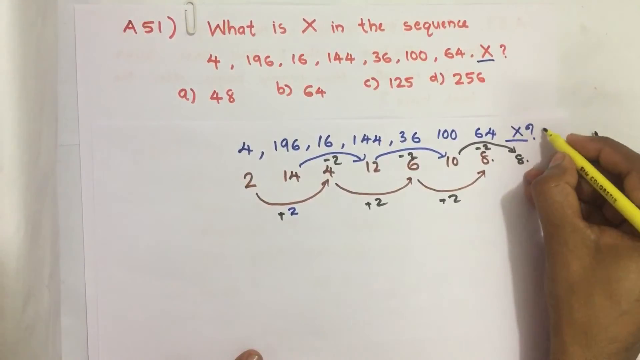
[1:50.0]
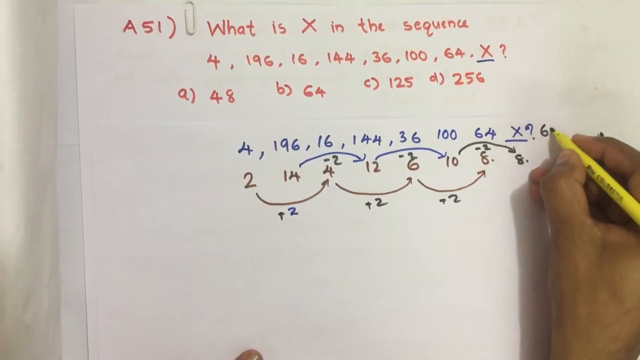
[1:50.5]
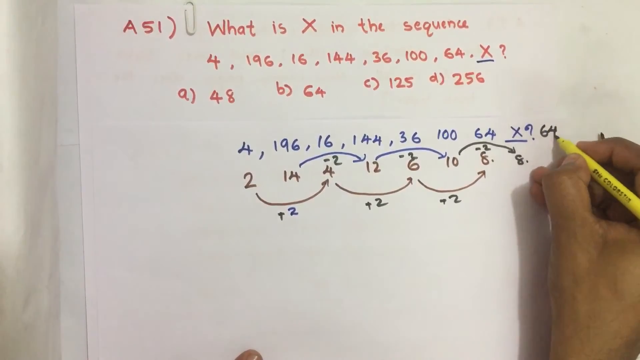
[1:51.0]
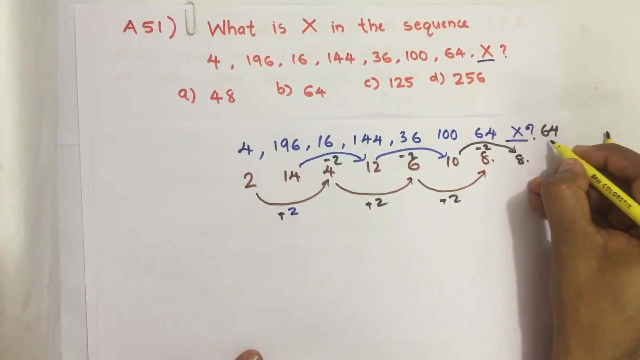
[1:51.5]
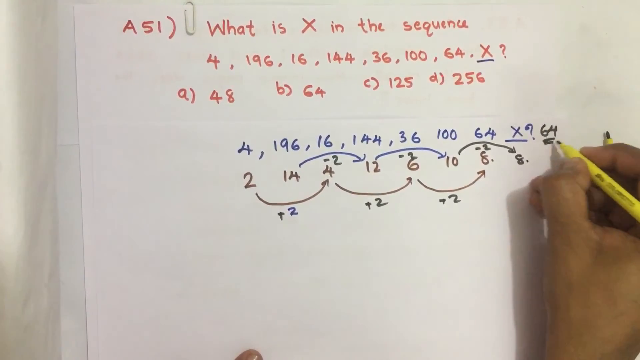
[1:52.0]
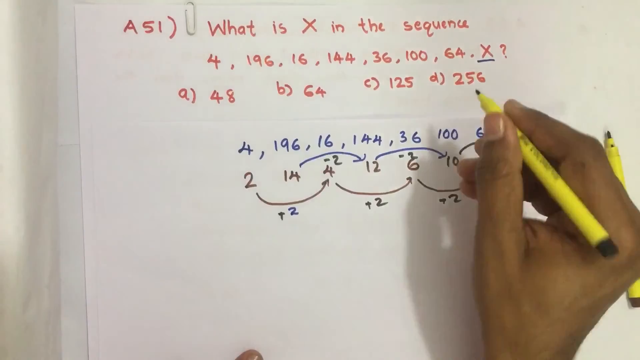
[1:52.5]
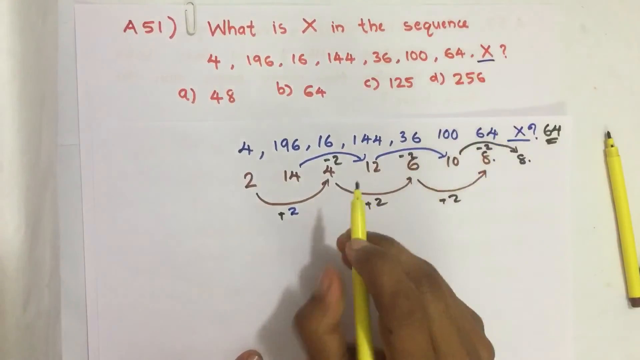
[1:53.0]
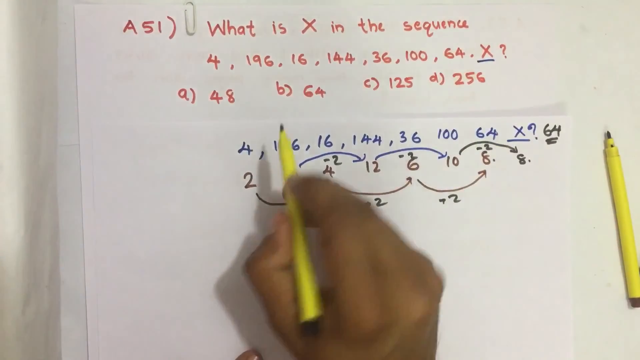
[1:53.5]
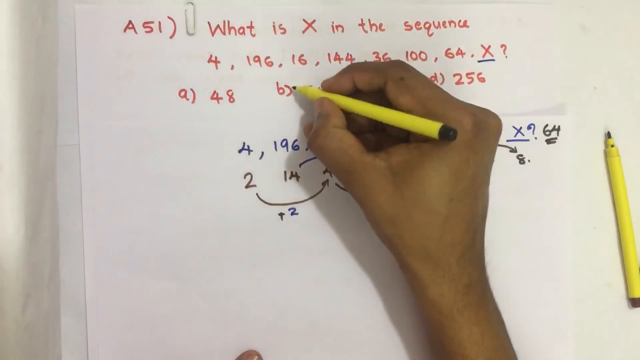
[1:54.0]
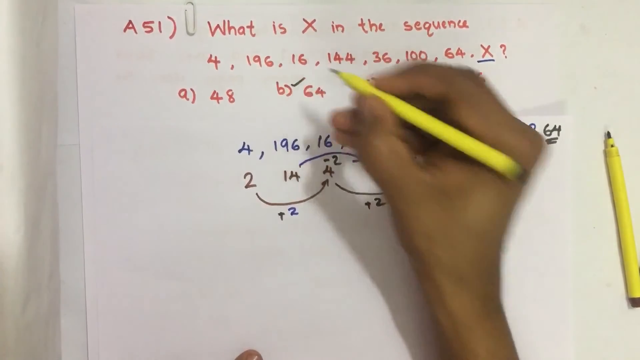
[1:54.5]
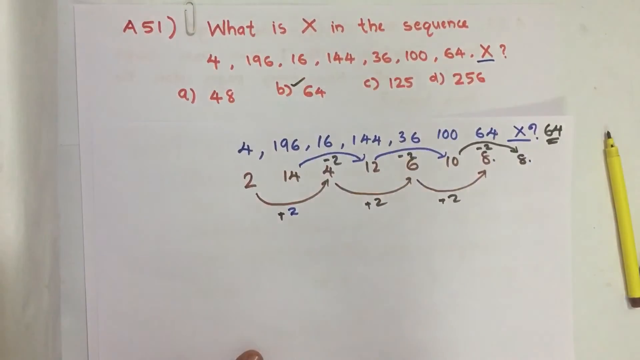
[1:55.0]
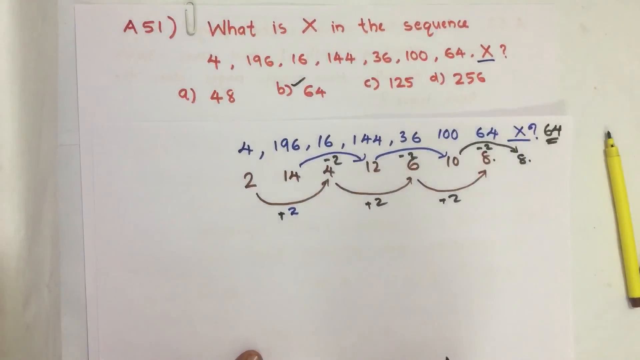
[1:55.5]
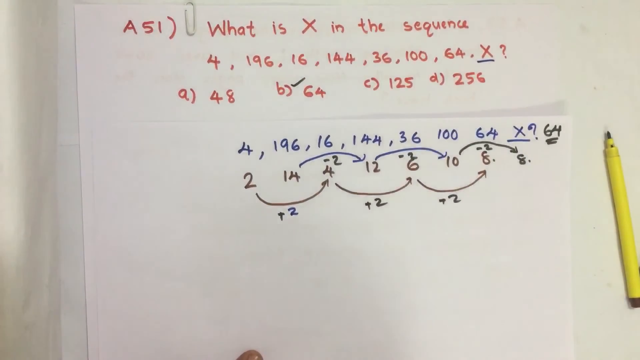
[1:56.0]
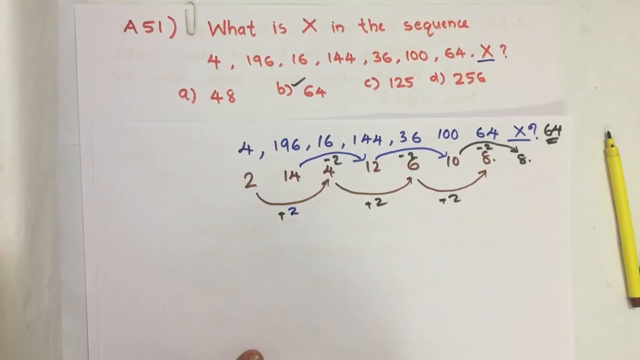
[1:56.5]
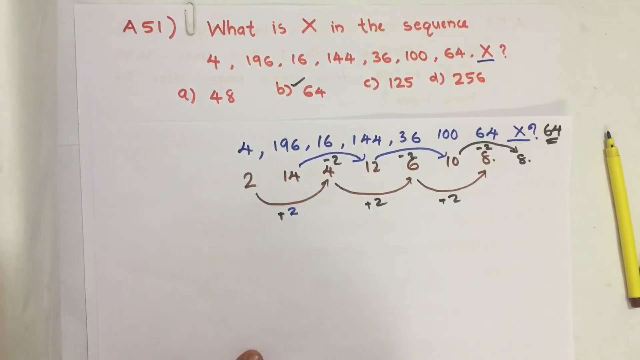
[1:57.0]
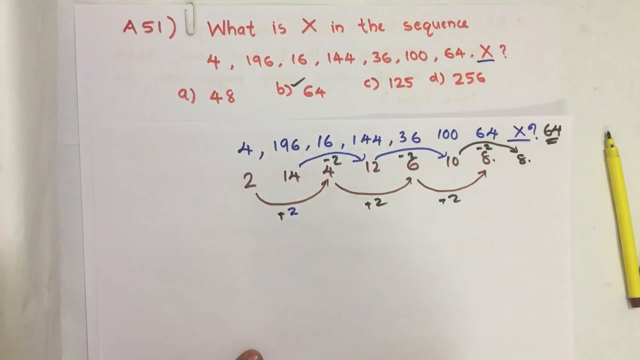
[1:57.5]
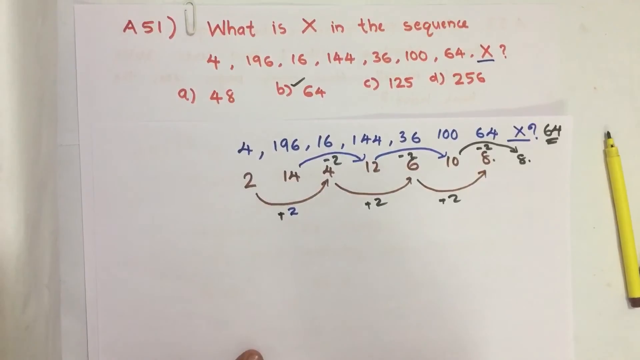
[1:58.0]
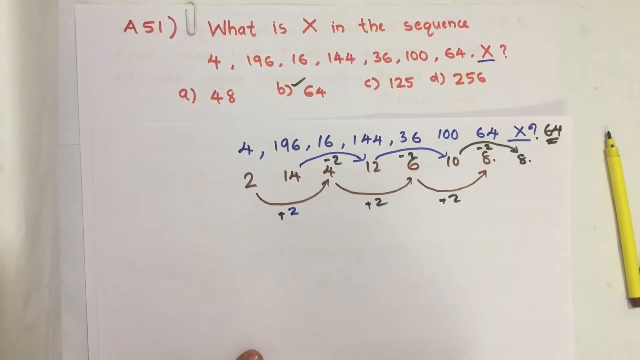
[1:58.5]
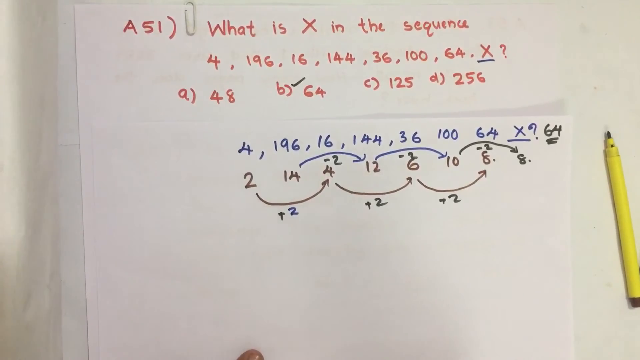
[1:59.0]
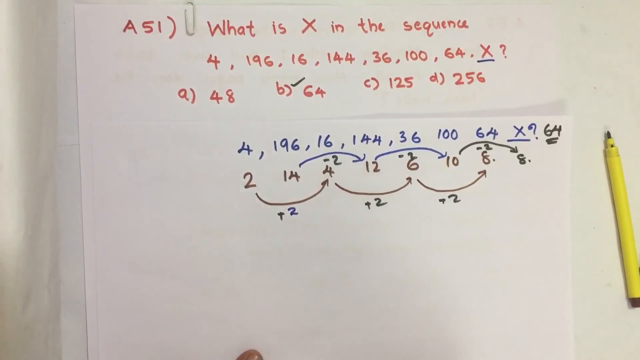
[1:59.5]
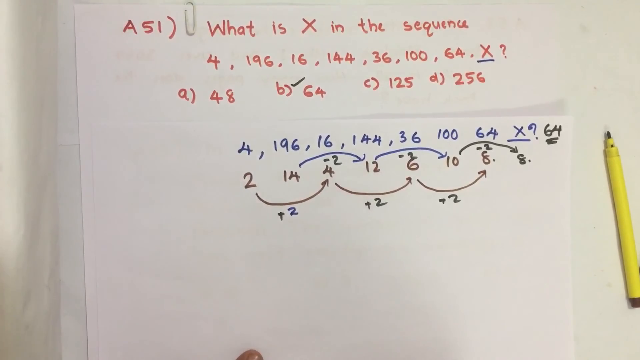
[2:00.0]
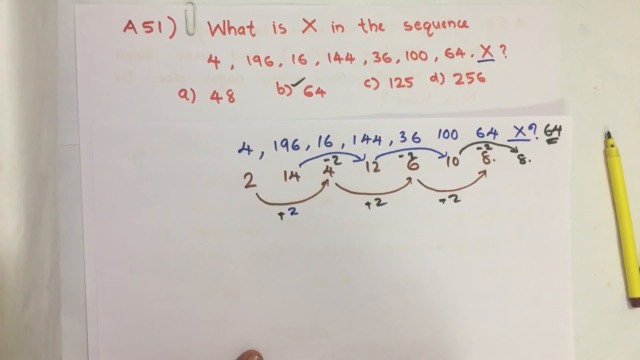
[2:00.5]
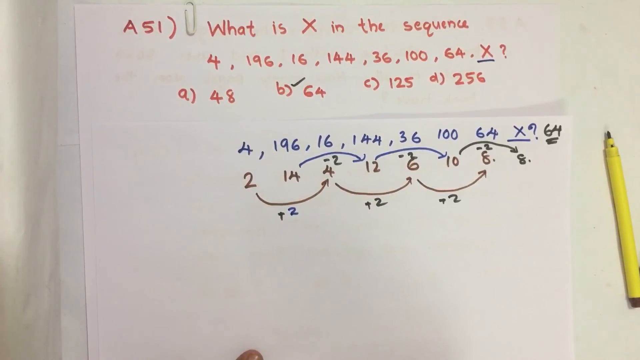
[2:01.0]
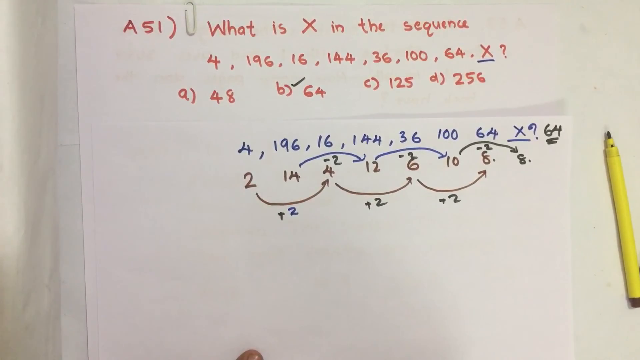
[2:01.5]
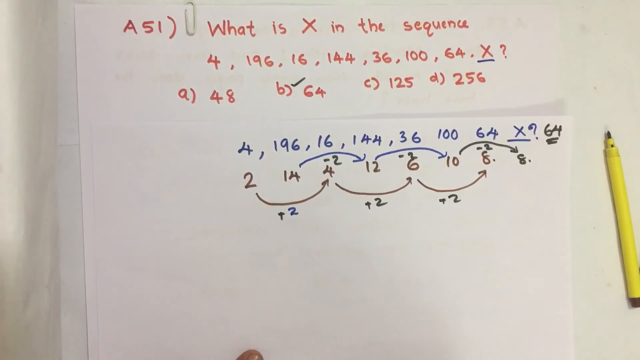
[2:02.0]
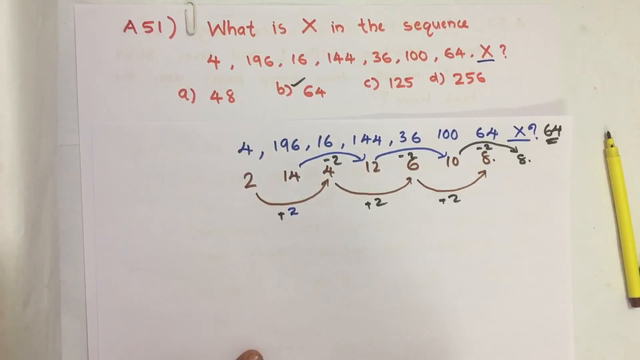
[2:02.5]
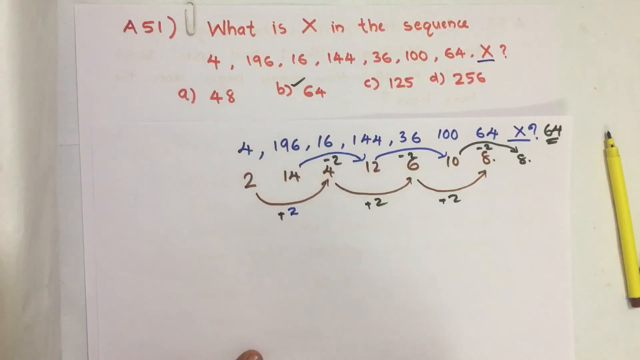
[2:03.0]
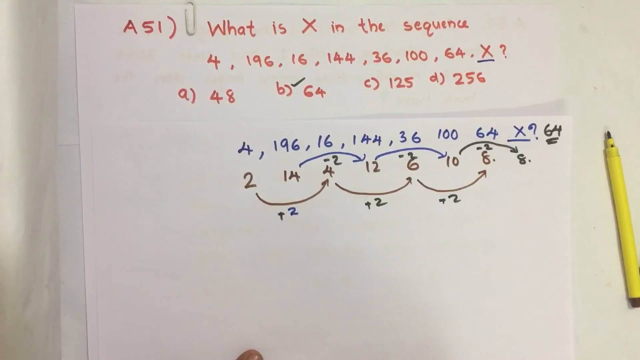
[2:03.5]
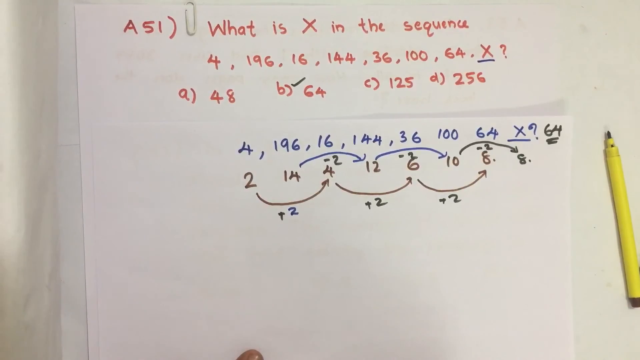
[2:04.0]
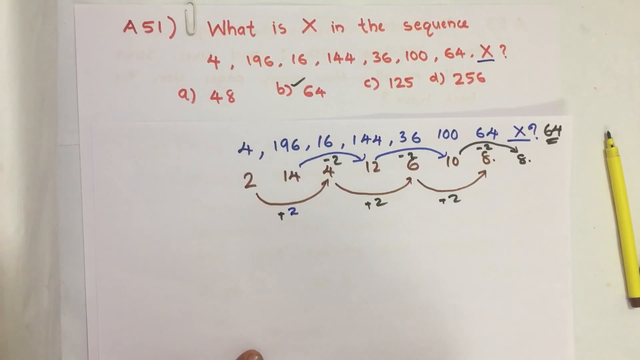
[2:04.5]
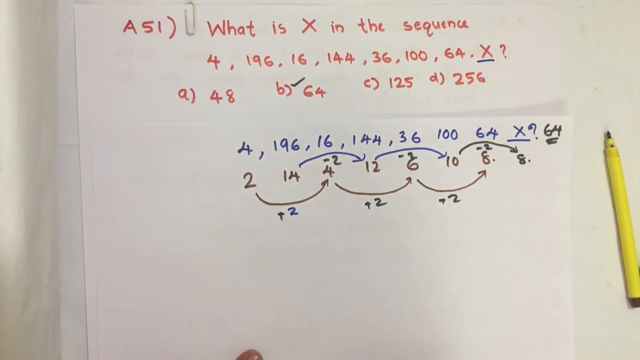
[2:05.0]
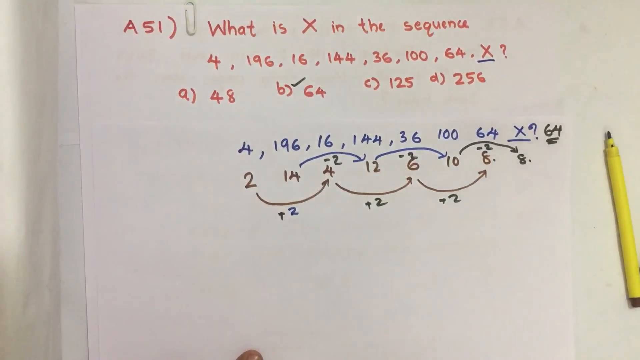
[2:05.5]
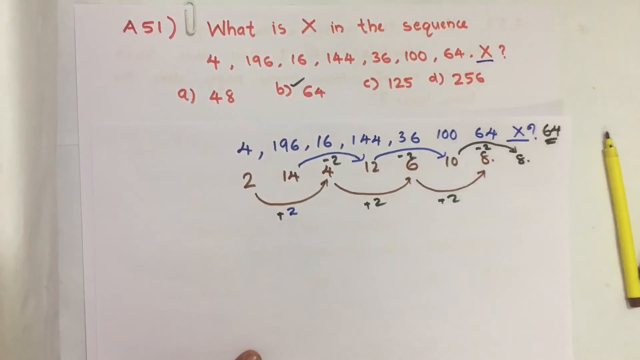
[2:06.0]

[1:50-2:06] The same white piece of paper with the problem in red and the paper clip at the top shows the completed pattern at the bottom, with plus two and minus two marked across alternating numbers. With the next number in the pattern found to be eight, the answer appears to be 64, since eight times eight equals 64.